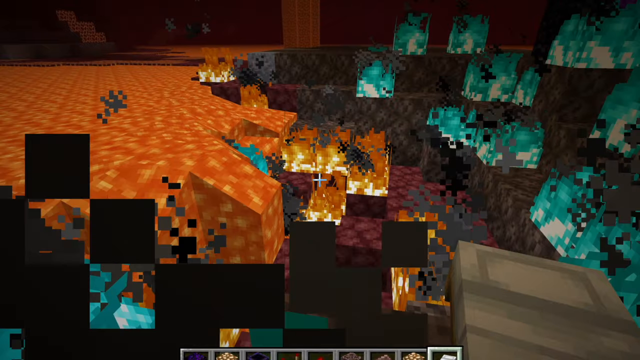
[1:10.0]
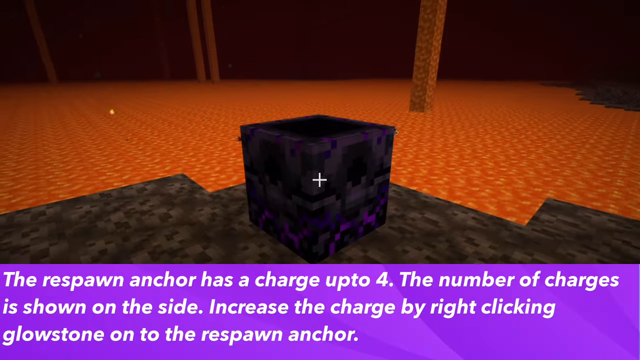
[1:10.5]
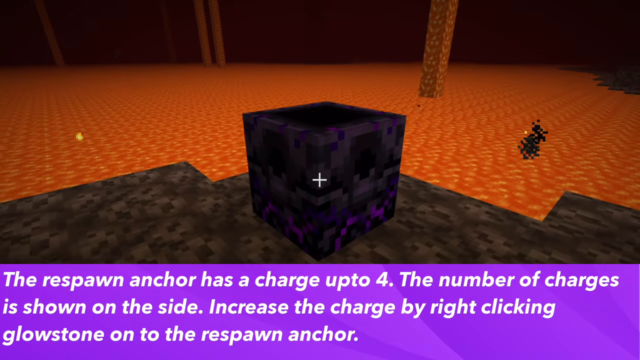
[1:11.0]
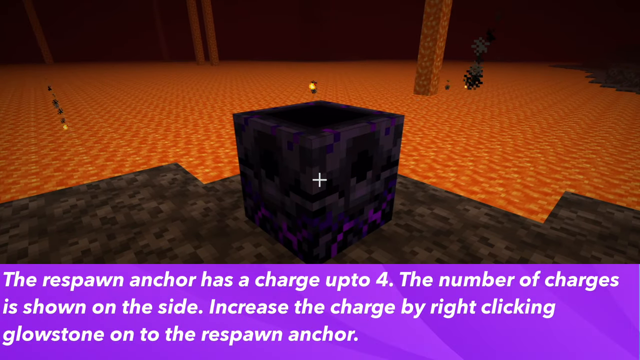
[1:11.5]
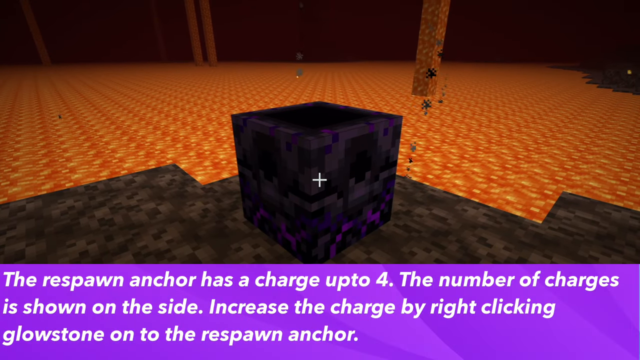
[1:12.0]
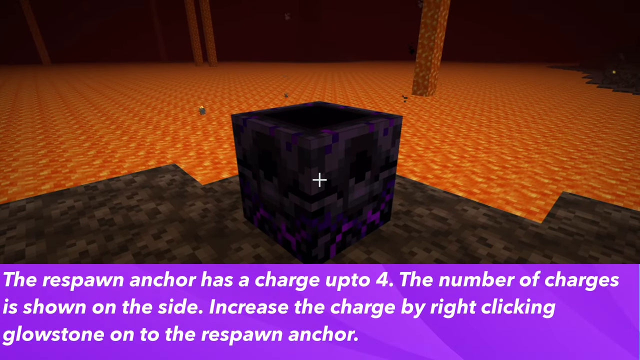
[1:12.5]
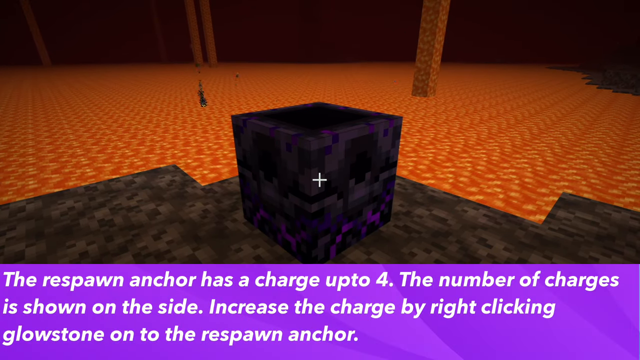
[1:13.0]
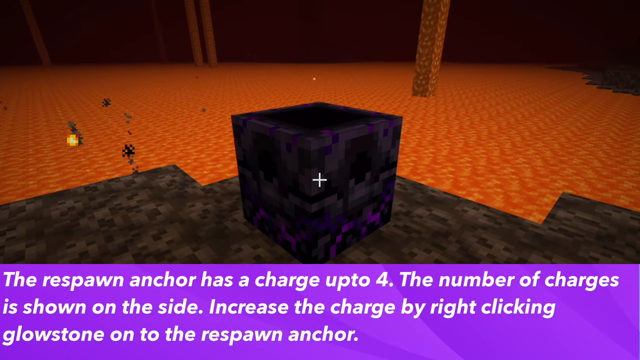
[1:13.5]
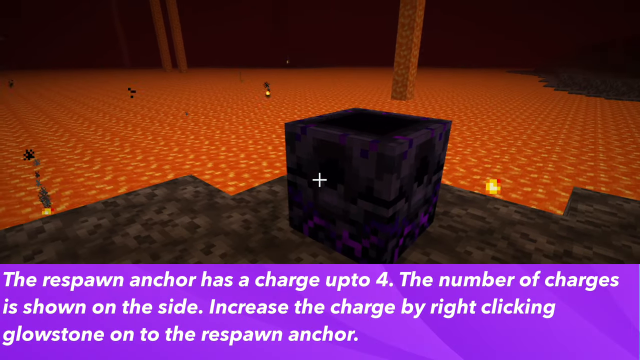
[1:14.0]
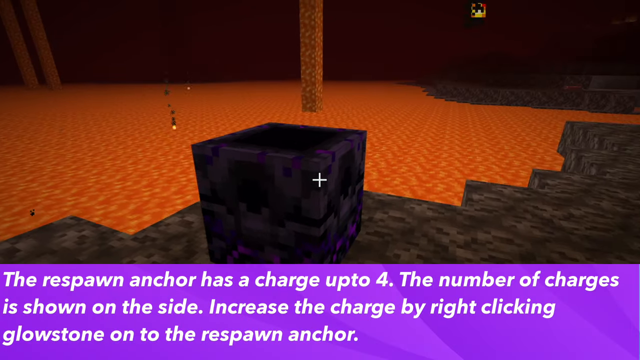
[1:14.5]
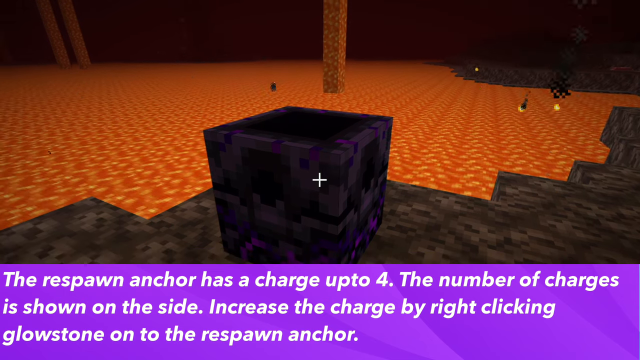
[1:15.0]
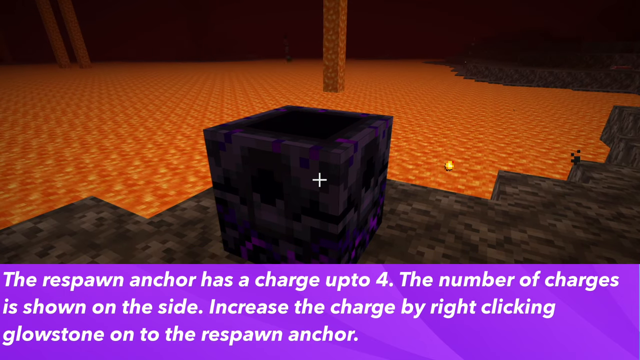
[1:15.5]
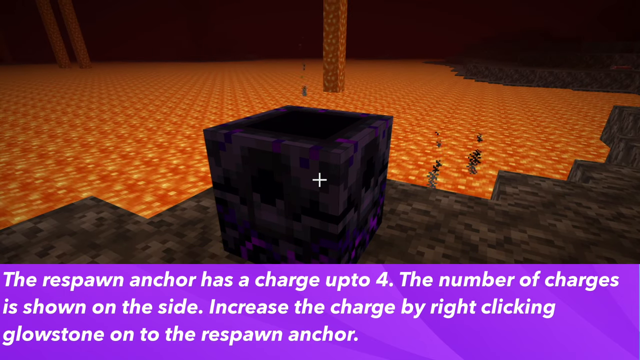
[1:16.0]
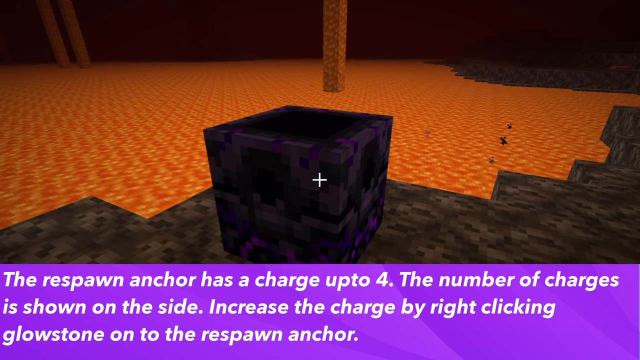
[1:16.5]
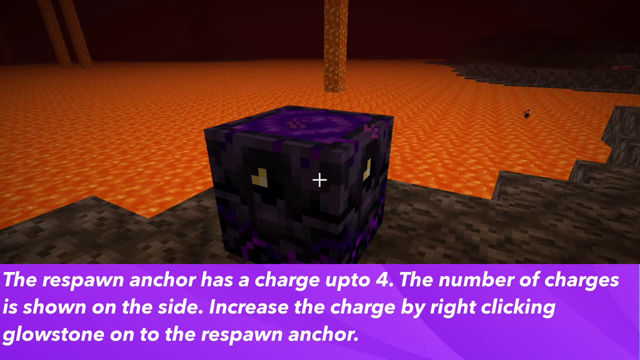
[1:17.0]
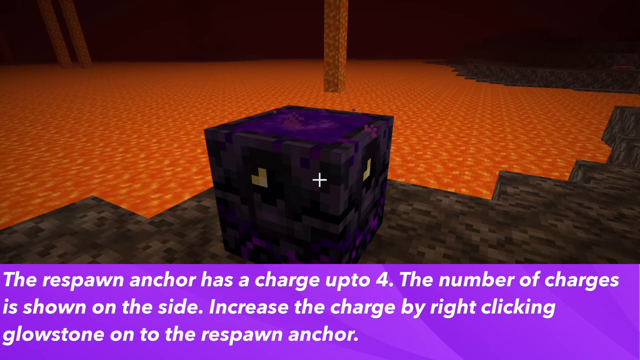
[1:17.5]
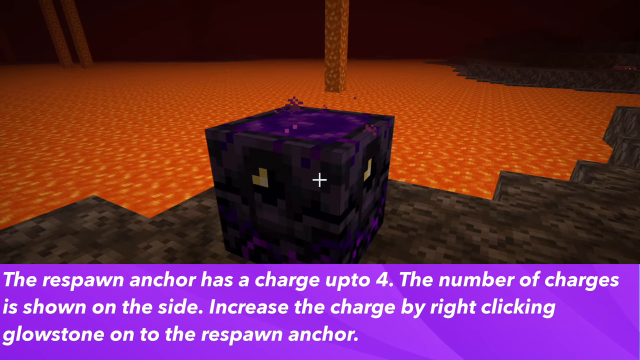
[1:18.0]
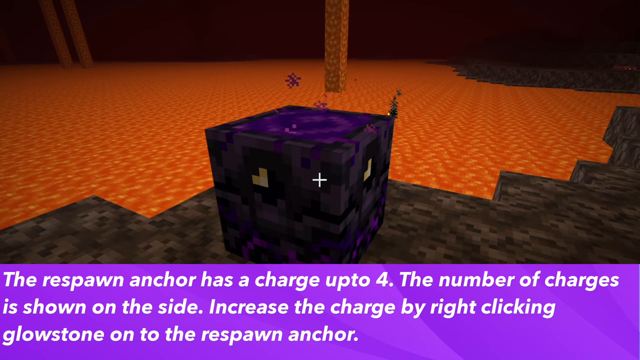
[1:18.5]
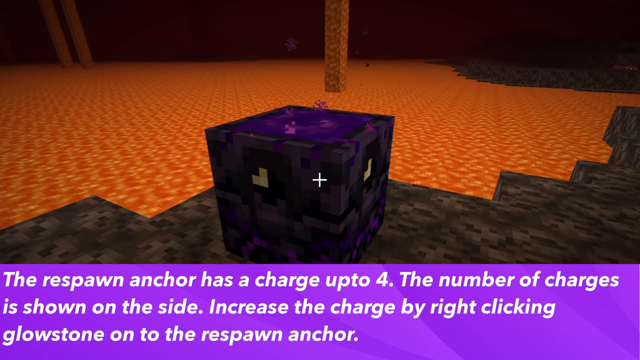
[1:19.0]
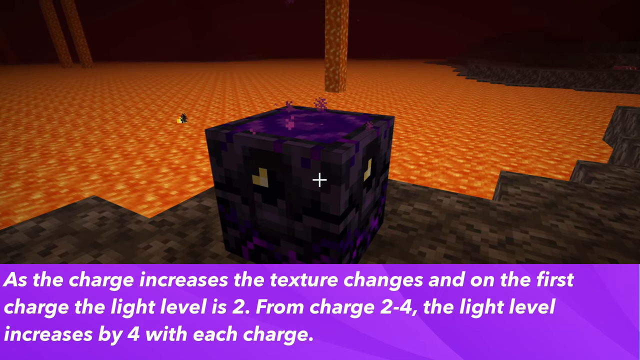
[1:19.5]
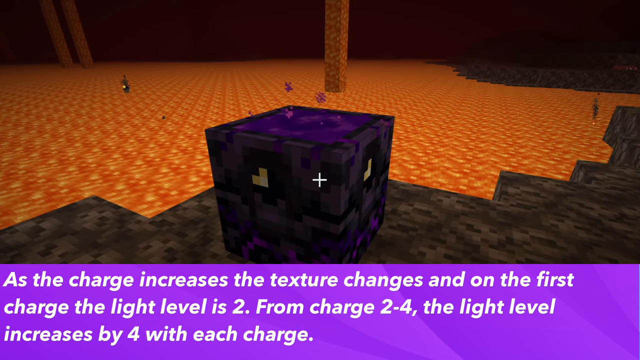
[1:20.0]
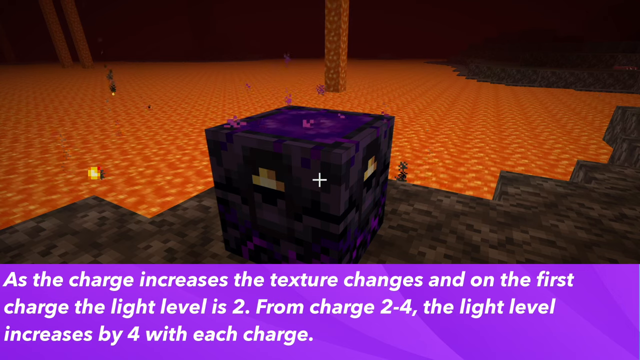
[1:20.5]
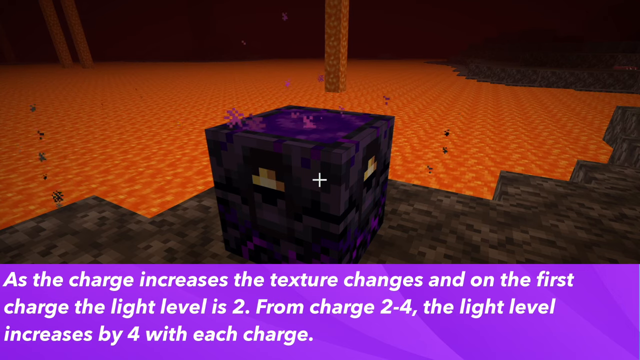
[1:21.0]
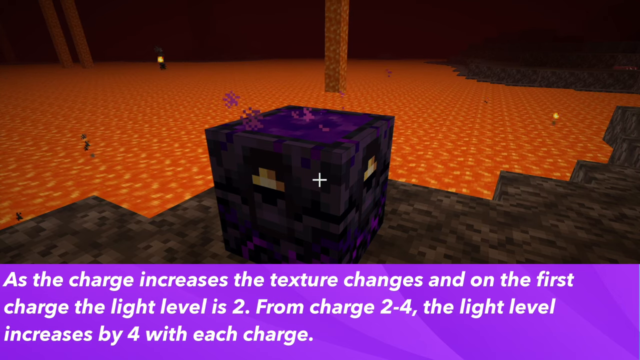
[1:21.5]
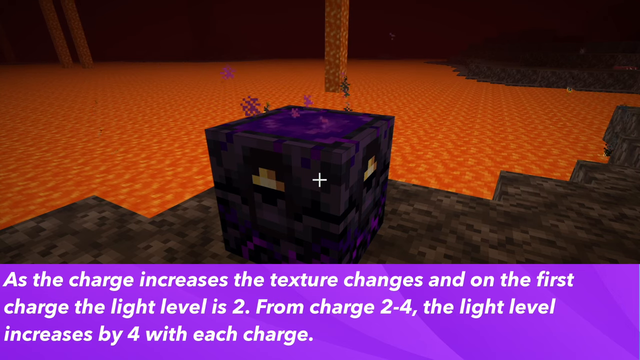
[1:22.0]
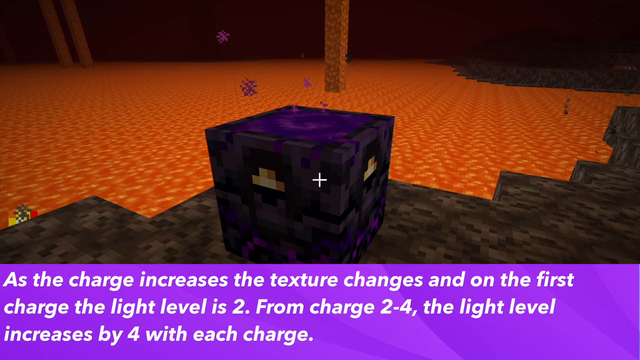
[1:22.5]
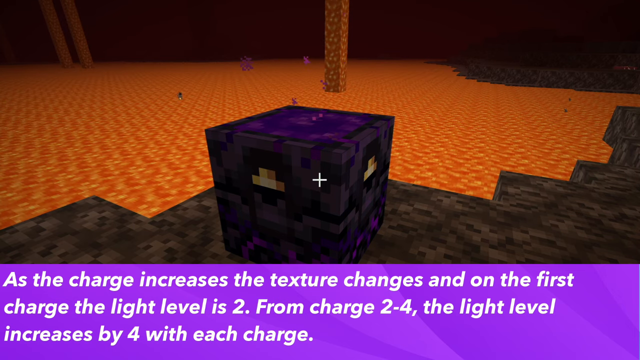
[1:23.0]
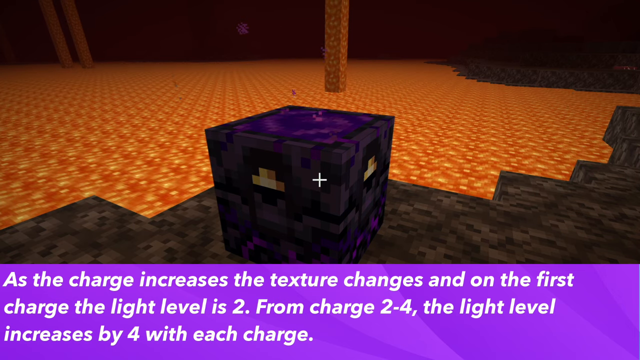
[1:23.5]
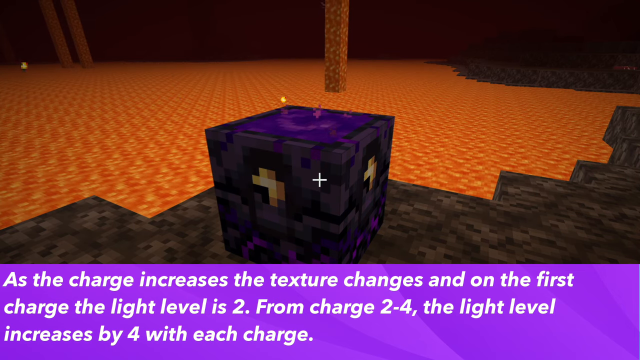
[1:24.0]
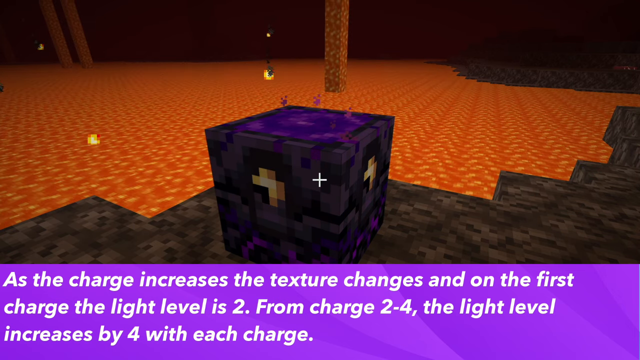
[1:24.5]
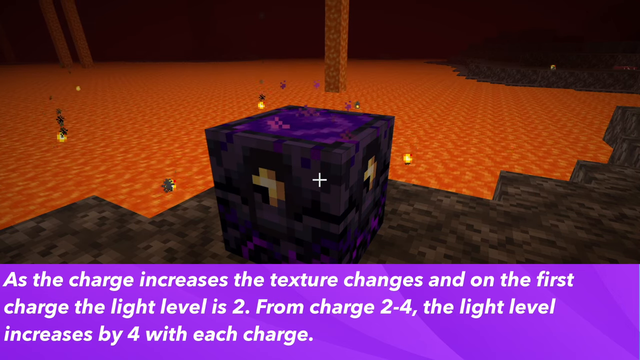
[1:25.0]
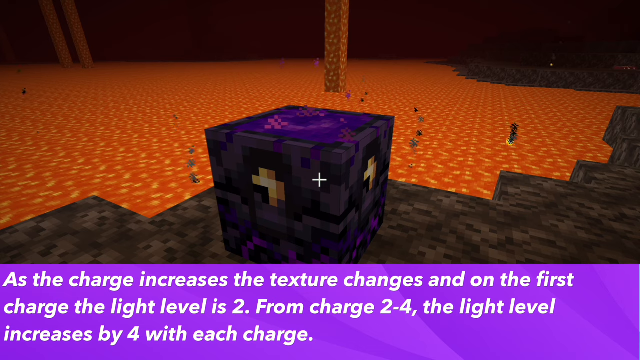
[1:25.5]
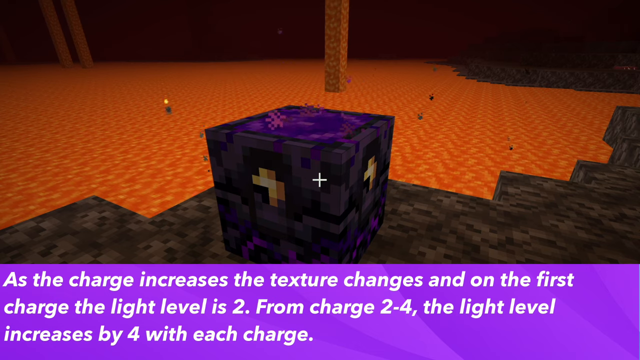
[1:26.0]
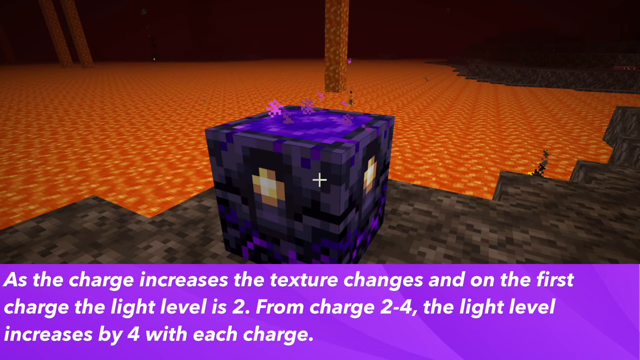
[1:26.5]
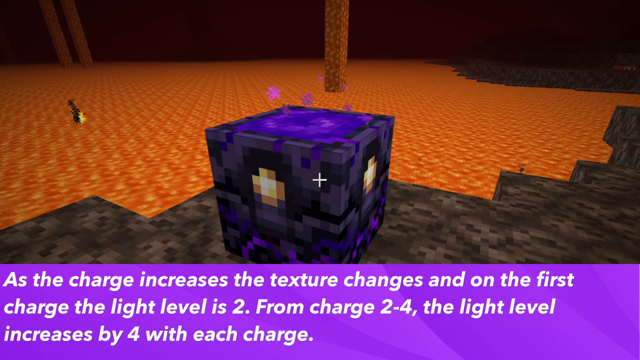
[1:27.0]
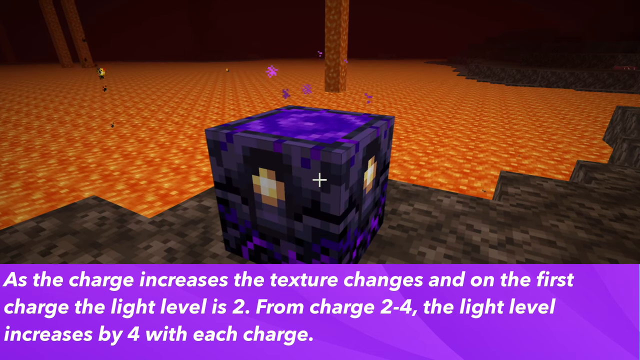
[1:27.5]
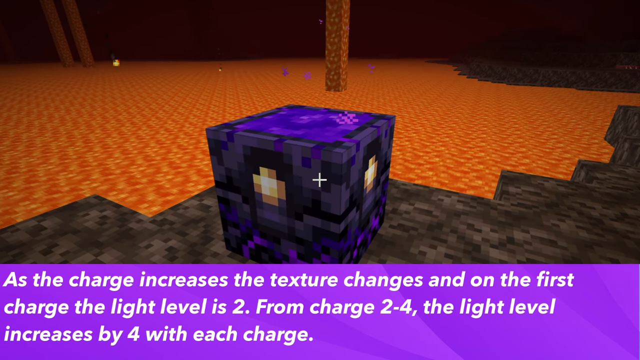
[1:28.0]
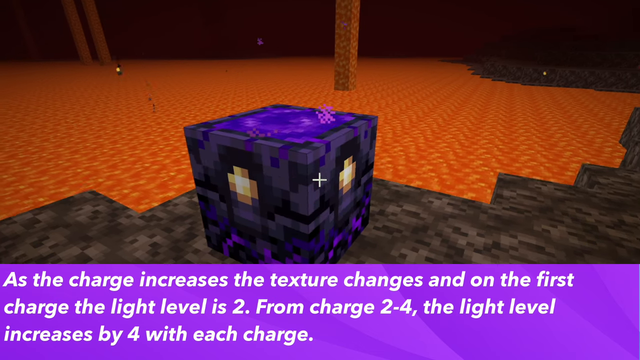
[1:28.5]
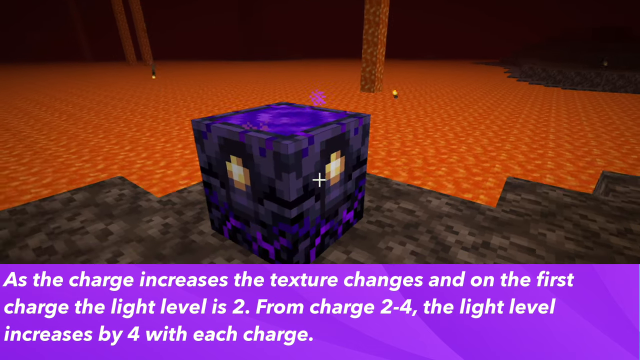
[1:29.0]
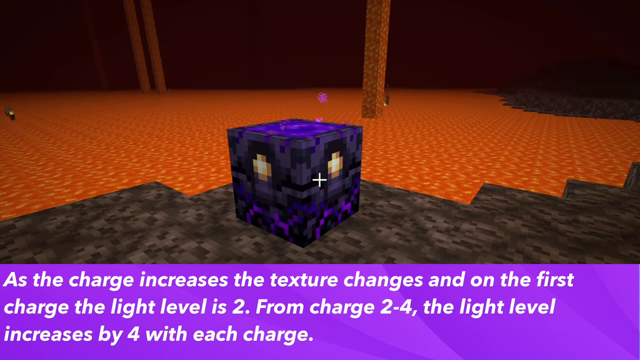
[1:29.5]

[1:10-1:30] On-screen text reads "The respawn anchor has a charge up to four. The number of charges is shown on the side. As the charge increases, the texture changes. On the first charge, the light level is two. From charge two to four, the light level increases by four with each charge." The purple box has turned dark, black. No characters are visible; there is only the orange floor and the box.